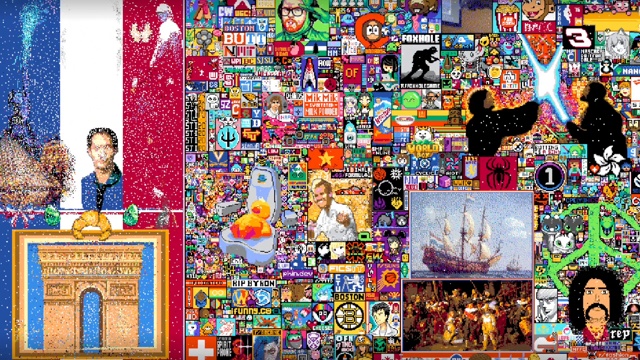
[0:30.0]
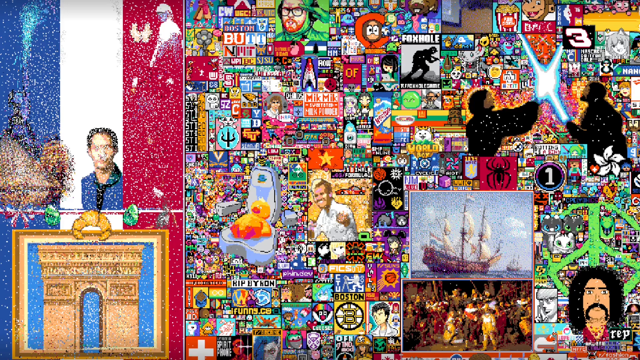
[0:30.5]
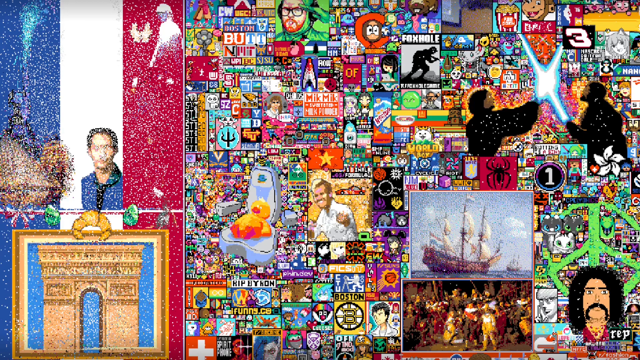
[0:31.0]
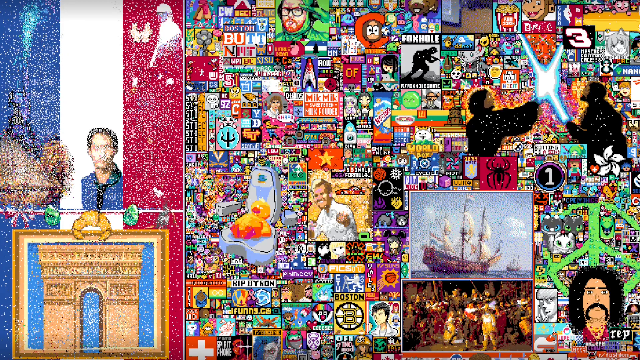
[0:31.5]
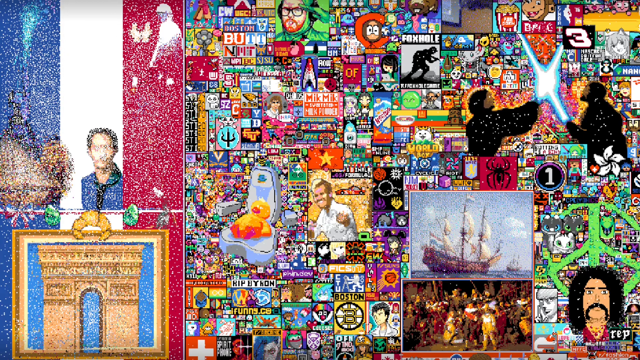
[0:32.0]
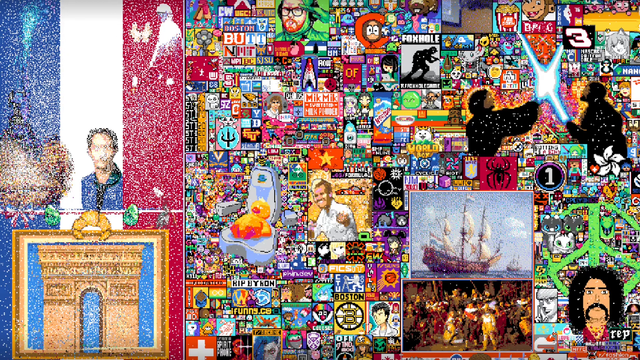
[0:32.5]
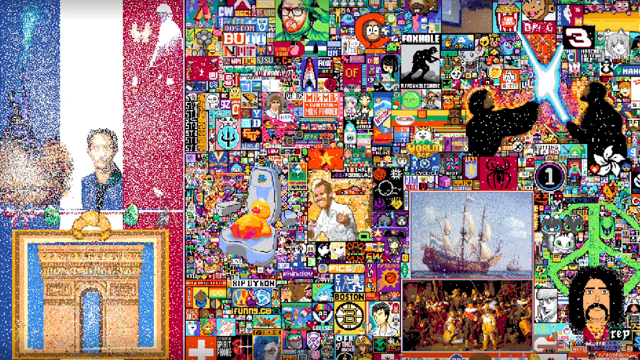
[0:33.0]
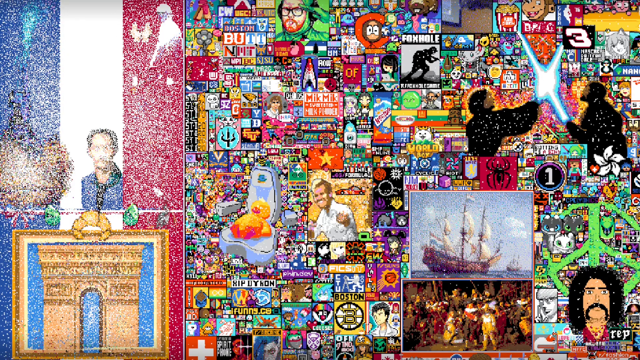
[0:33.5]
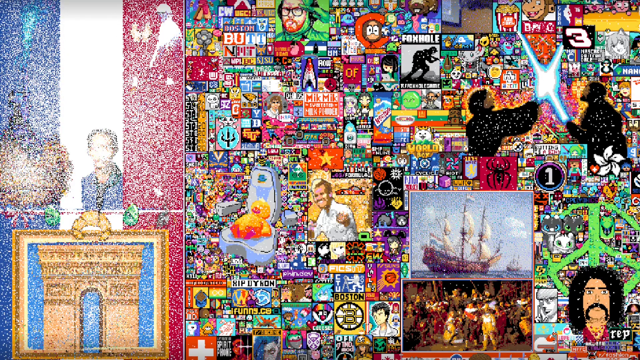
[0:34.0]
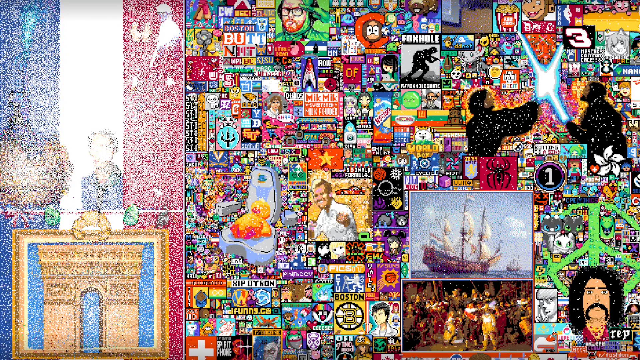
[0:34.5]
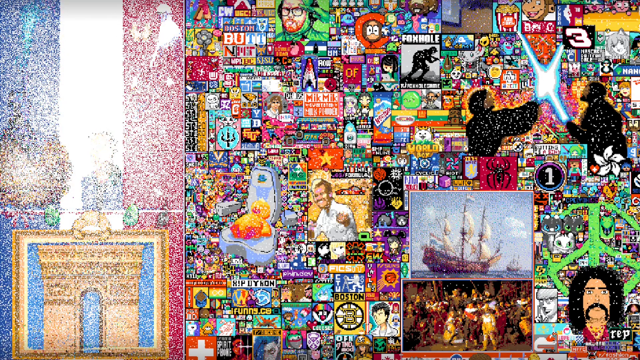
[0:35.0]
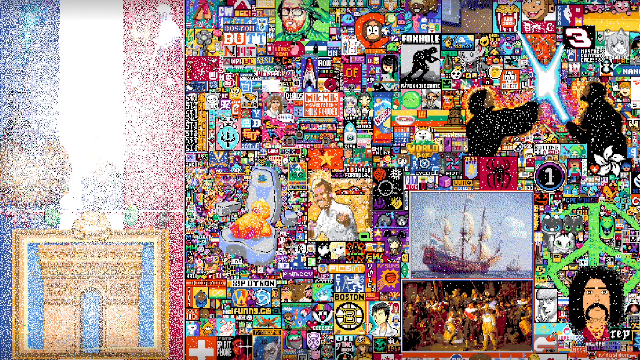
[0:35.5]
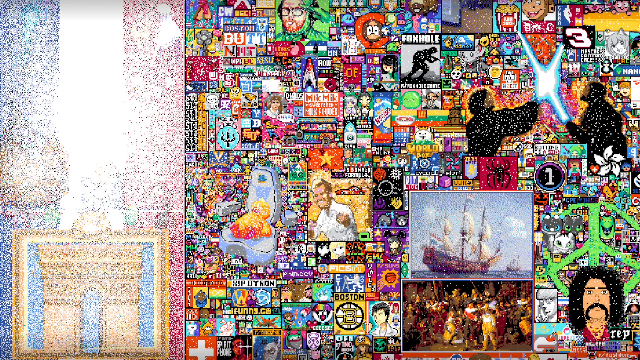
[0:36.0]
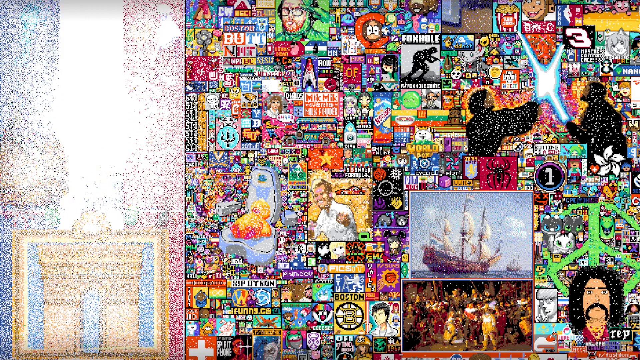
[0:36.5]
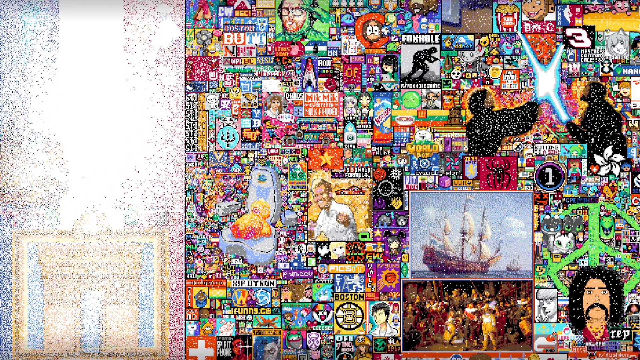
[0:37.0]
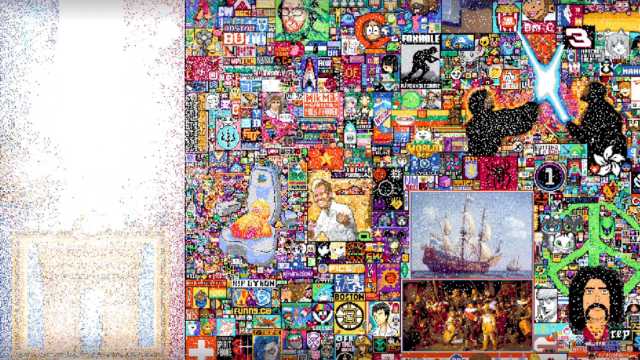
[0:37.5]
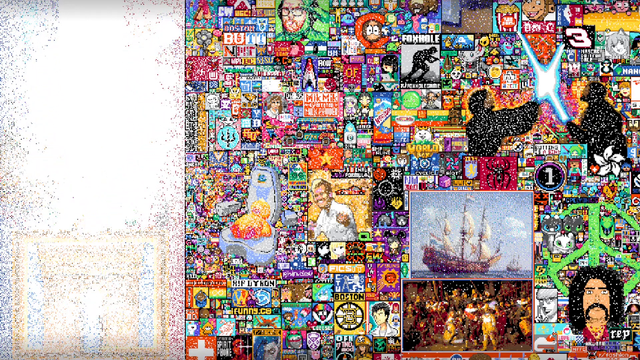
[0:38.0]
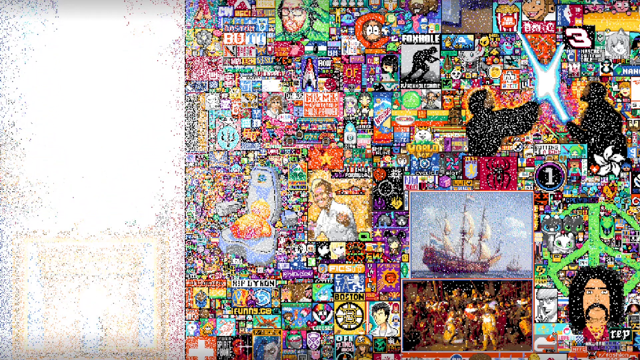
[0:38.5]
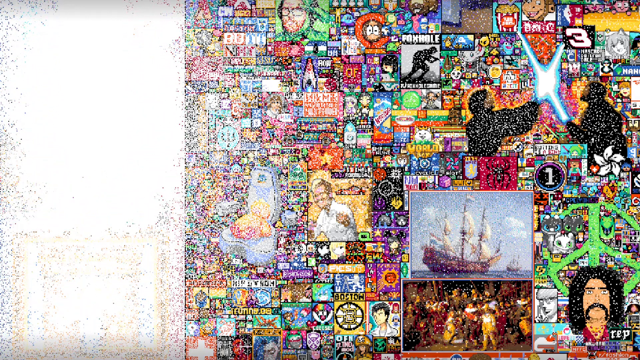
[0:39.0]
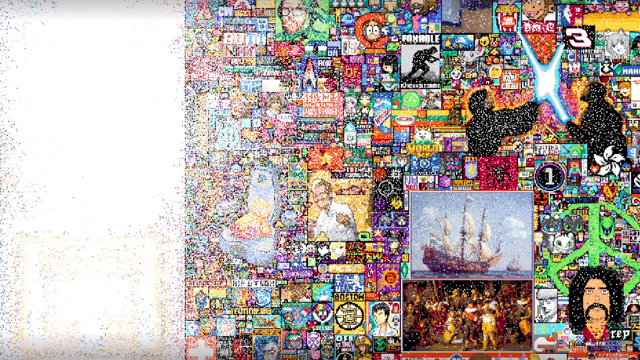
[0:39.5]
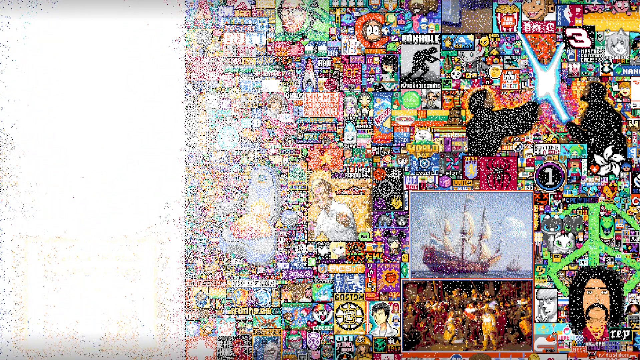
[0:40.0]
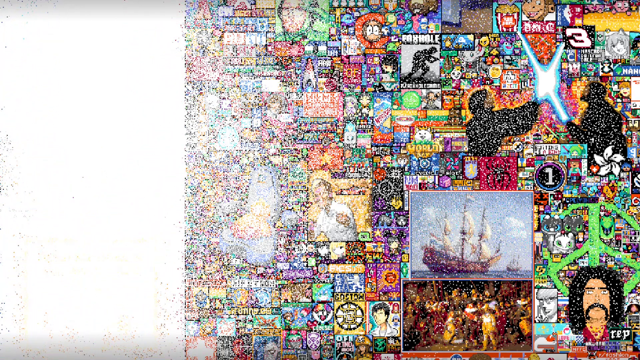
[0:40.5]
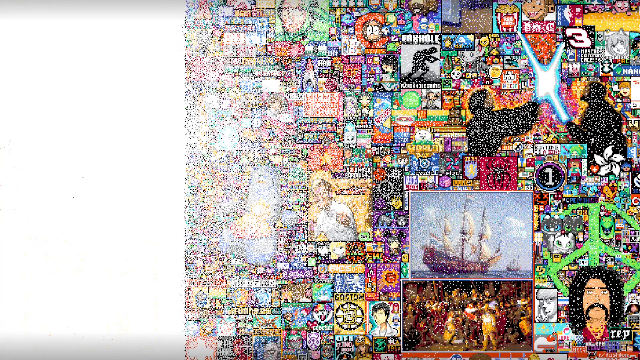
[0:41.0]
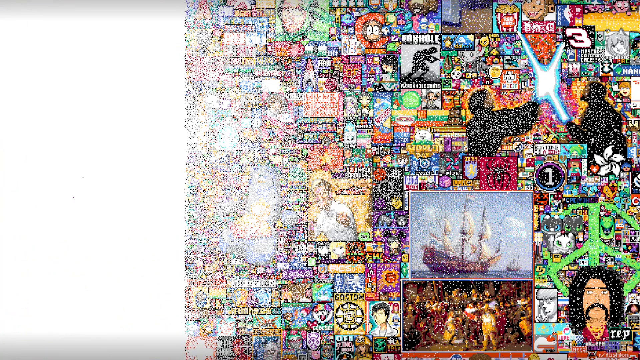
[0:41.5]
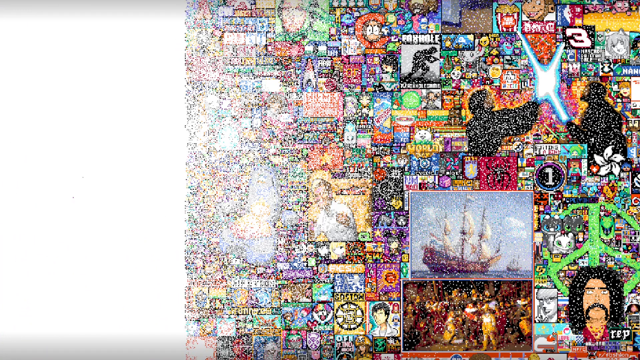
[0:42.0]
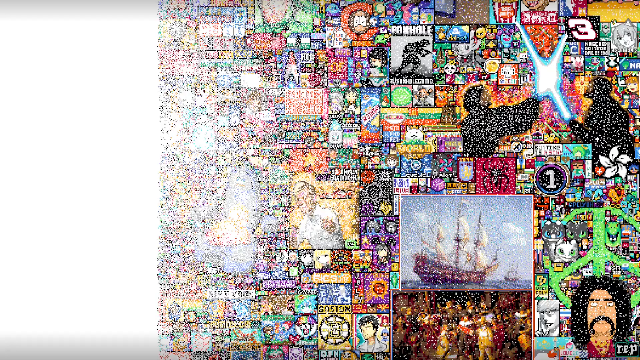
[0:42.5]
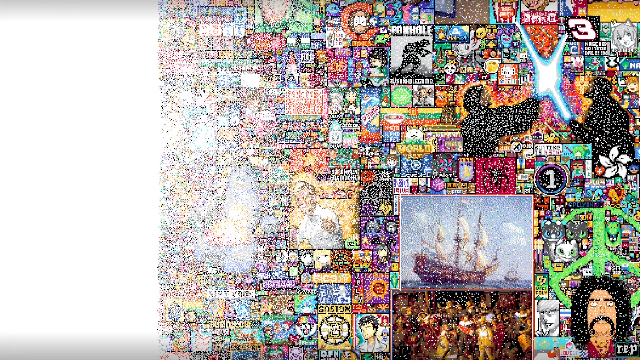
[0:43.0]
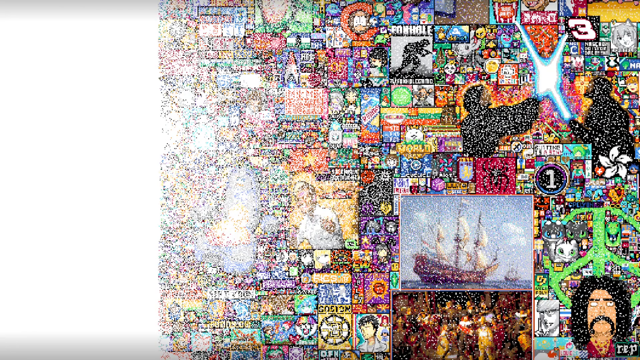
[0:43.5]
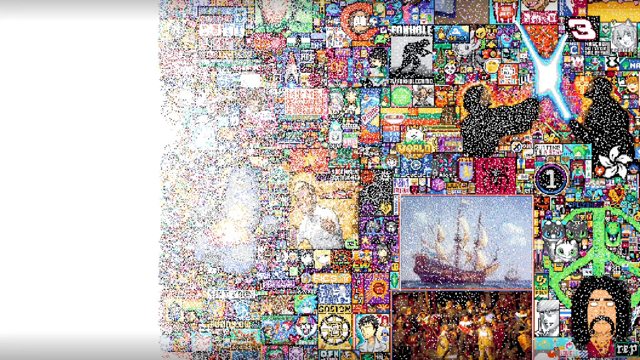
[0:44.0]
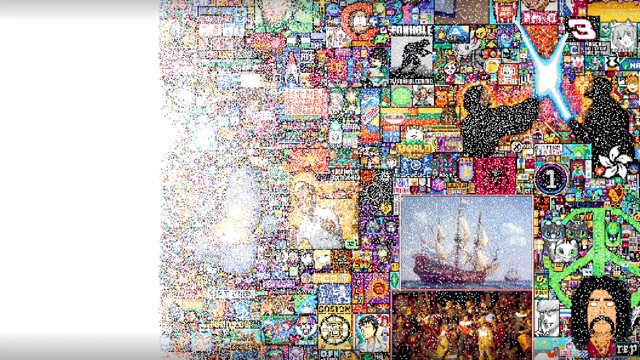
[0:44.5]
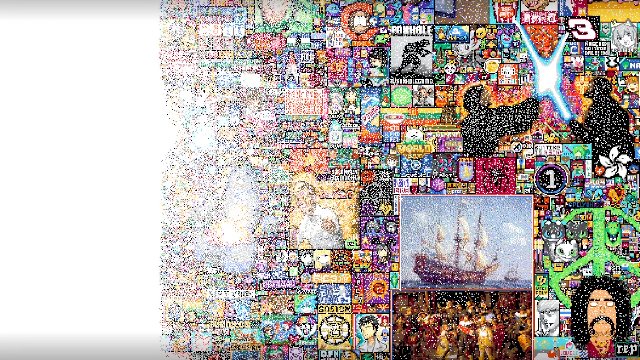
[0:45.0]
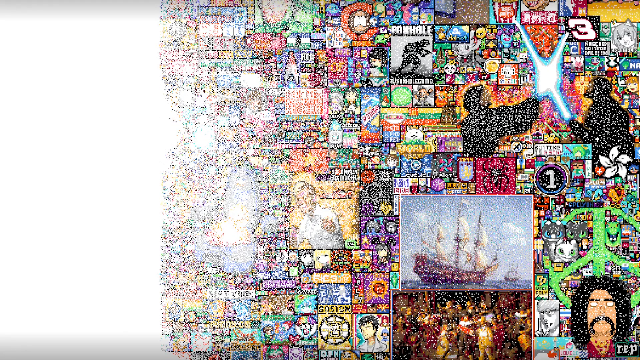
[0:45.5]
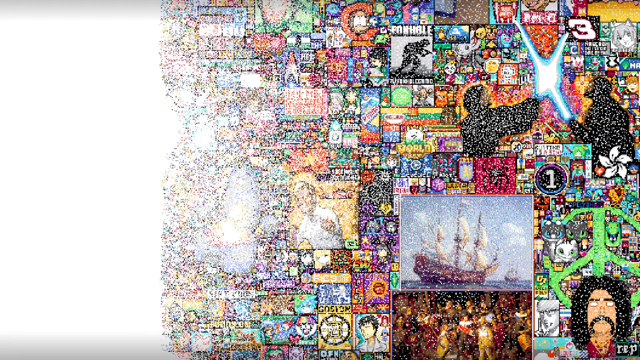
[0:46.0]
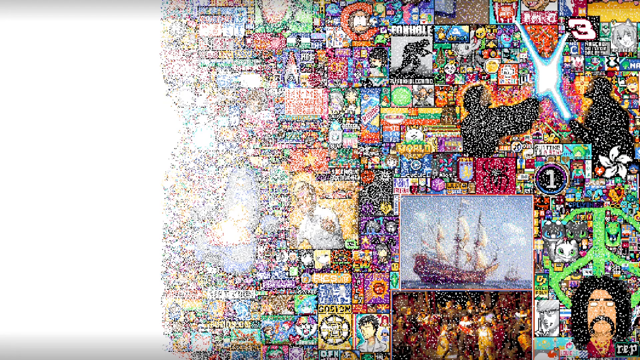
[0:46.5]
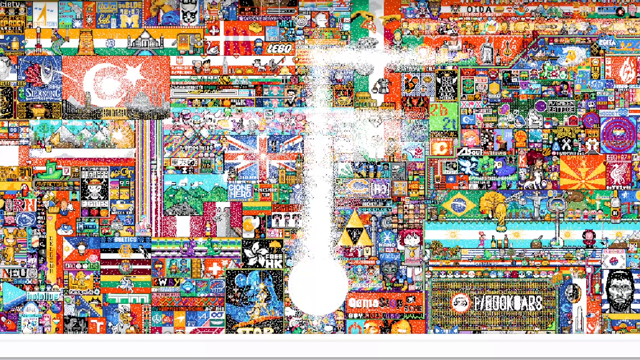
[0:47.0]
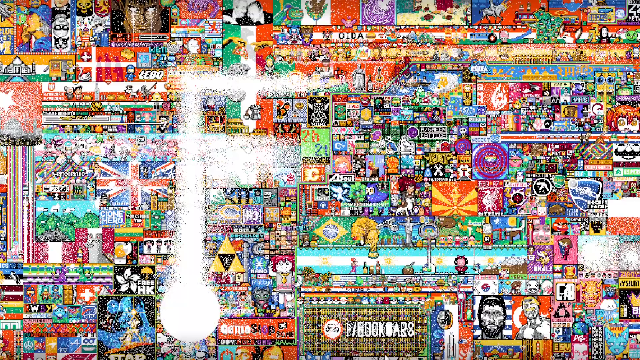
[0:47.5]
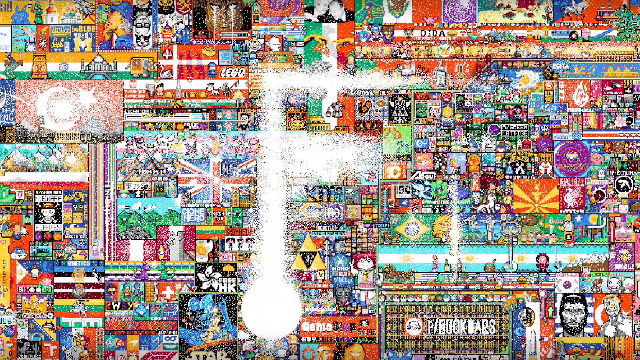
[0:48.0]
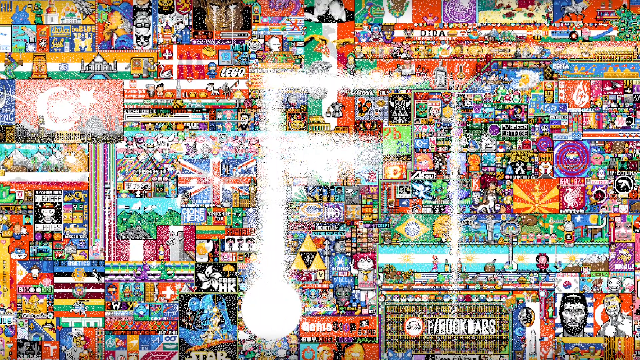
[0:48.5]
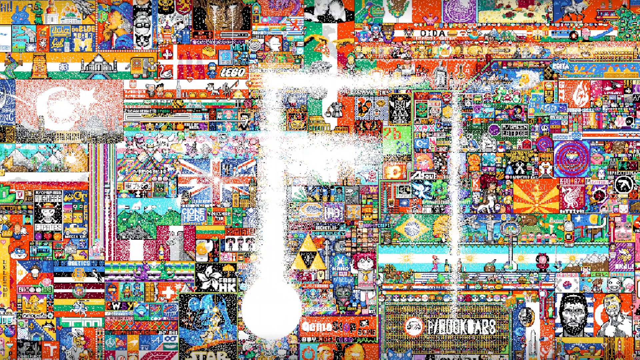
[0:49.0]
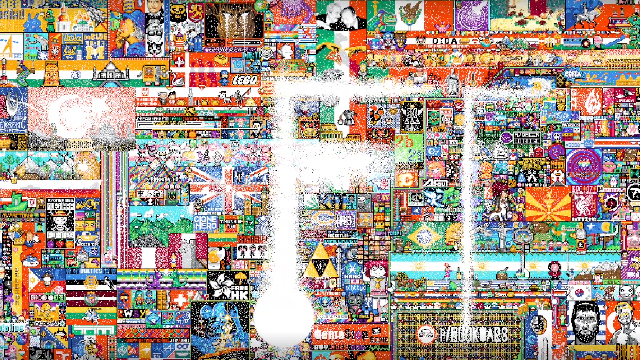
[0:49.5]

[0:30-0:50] The France flag is disintegrating, and it looks like something is about to replace it. The left-hand corner is now all white, and the whole thing is apparently disintegrating. The view moves to a different section of the art piece, which is hard to see. Visible items include the Invisible Bunny Girl anime thing, the Hong Kong flag, popcorn, a Pokemon called Minico, a game called DidiNet, the orange hoodie guy from South Park, r/foxhole gaming, and a World Box logo showing a white cat with a crown. There is Formula One with a picture of a red racing car, two characters from an isekai anime holding hands, and a YouTuber dressed all in green with a red beard.